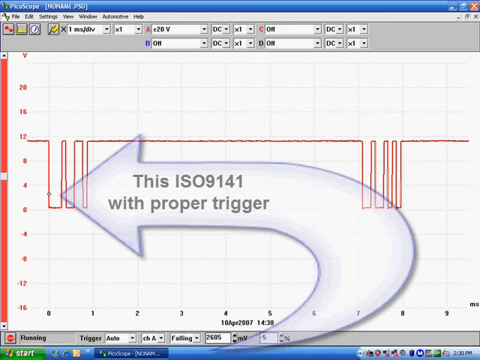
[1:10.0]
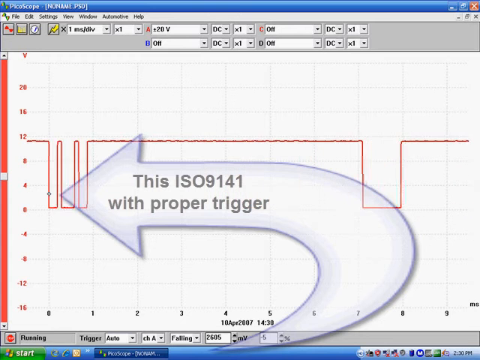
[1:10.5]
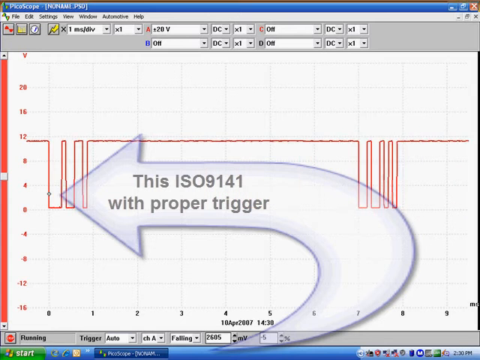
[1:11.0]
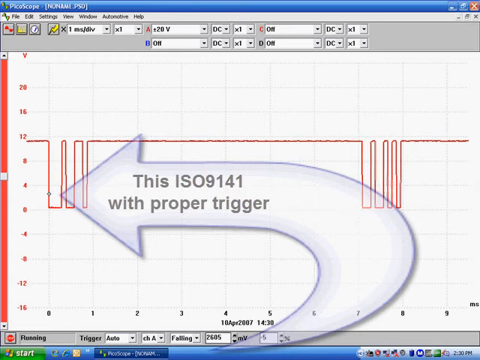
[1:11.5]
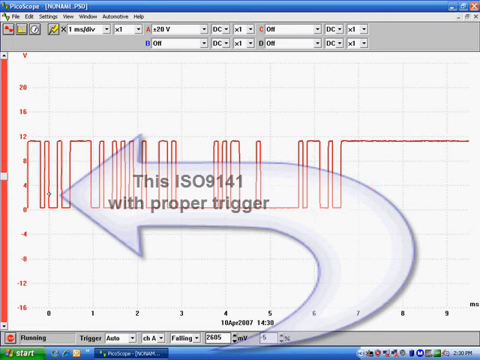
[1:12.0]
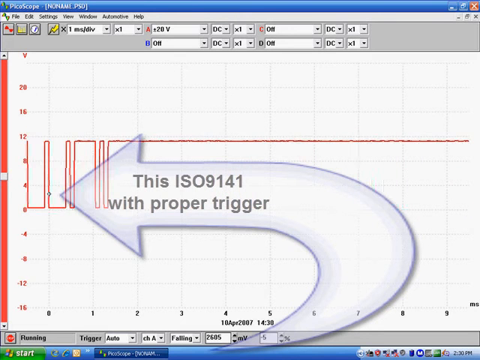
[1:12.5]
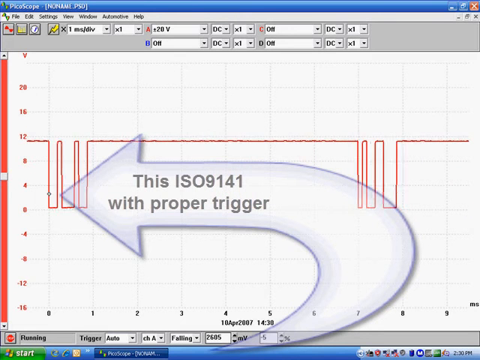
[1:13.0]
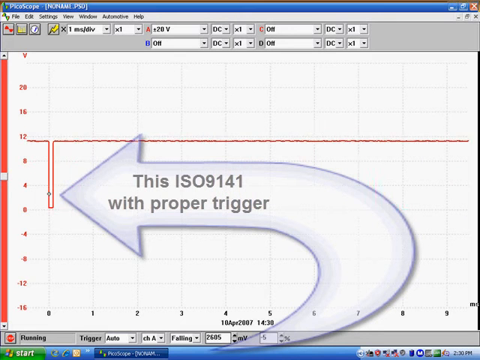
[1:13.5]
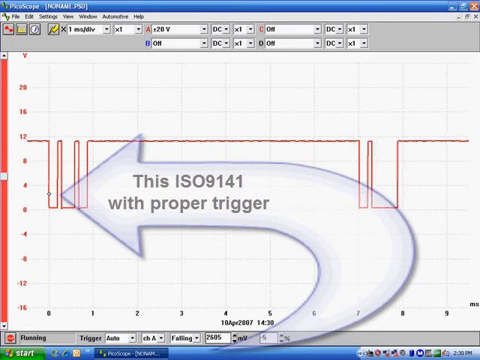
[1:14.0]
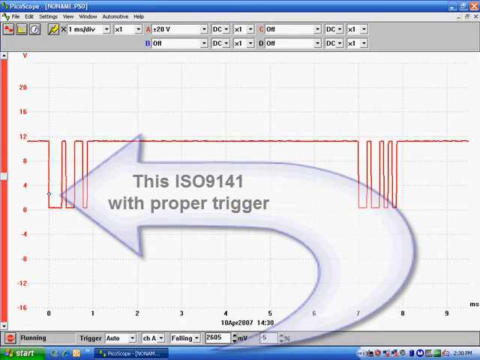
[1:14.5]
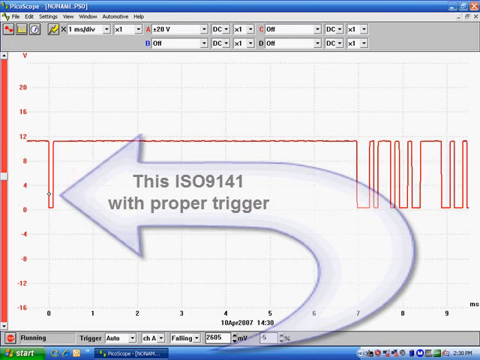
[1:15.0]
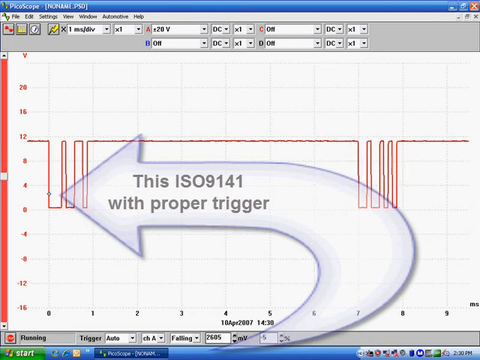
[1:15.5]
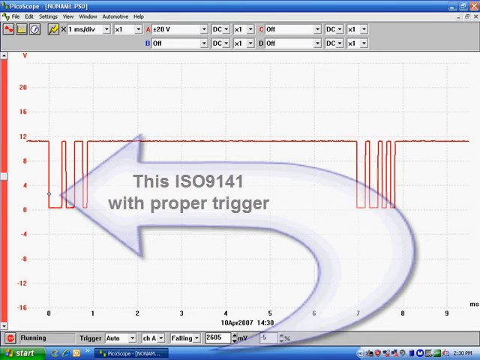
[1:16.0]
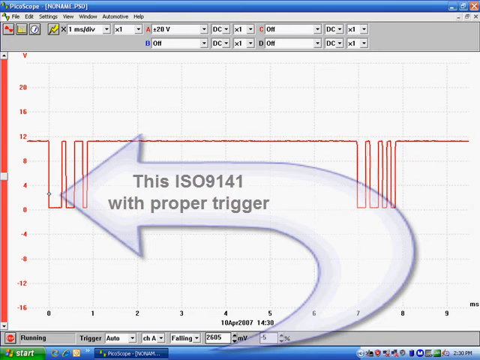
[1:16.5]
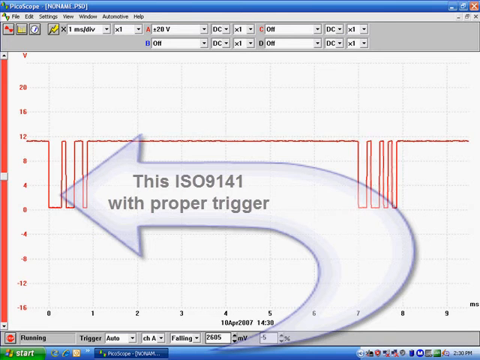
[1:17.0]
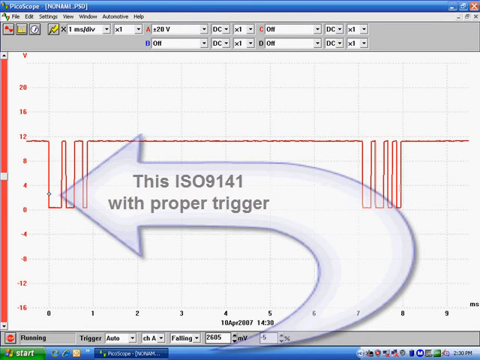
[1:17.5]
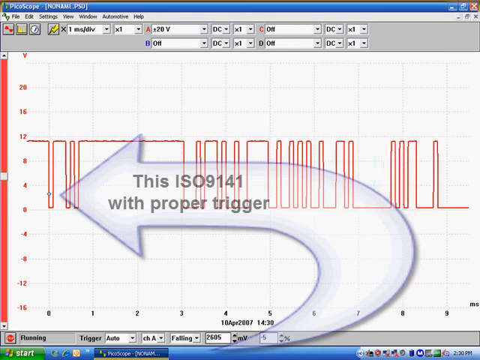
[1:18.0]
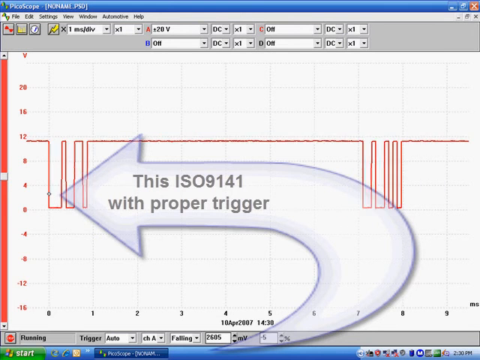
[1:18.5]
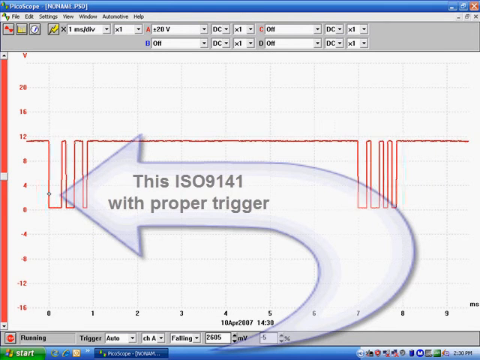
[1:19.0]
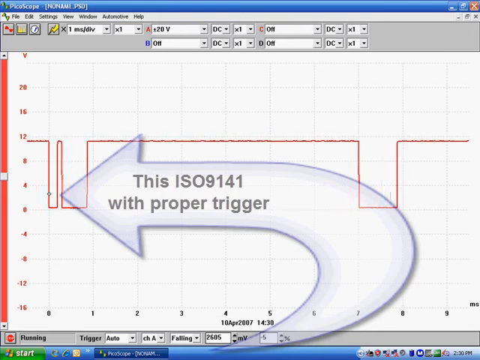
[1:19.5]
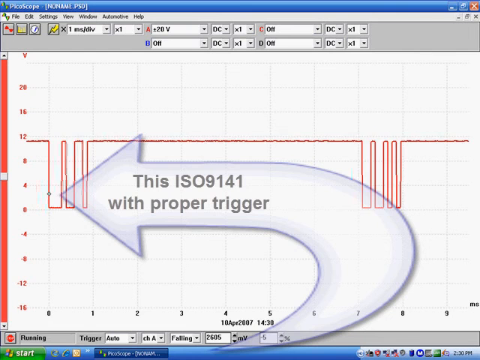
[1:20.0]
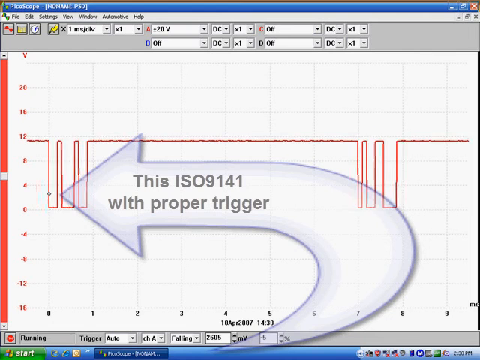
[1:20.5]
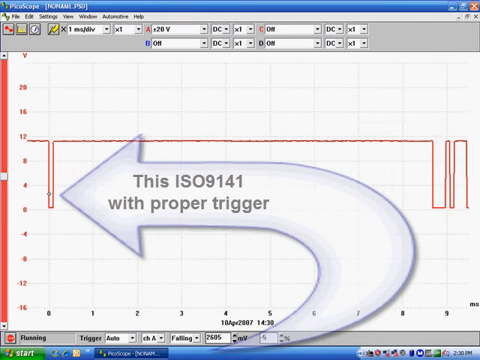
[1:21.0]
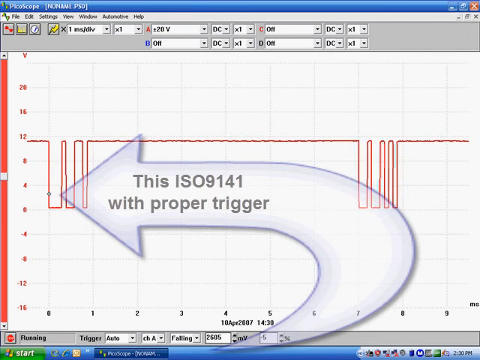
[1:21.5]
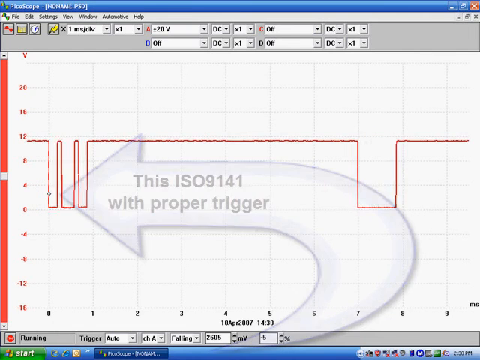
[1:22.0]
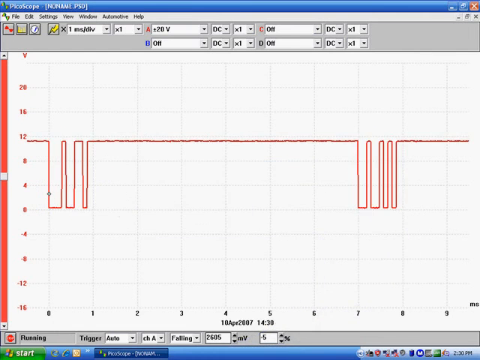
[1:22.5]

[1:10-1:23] An overlay in the middle of the screen shows an arrow pointing to the left, to a very specific point on the chart. The chart in the center is now red, and the arrow carries a text overlay reading "this ISO 9141 with proper trigger." The chart is a sort of scale in the middle of the program window, made of red lines moving from left to right, horizontal and vertical lines that go across, down, and back up.